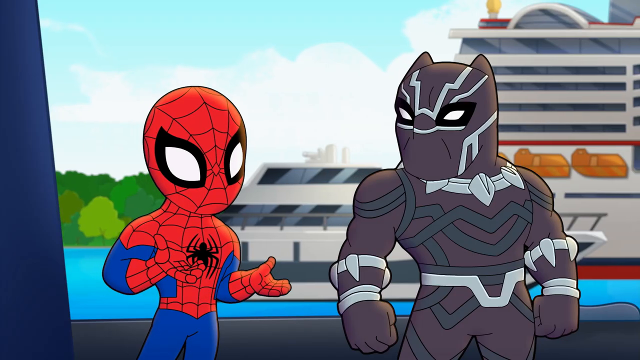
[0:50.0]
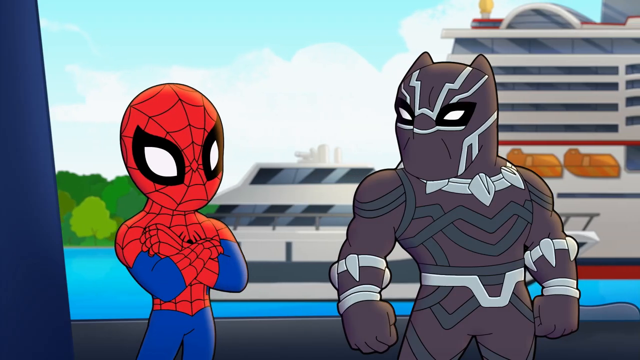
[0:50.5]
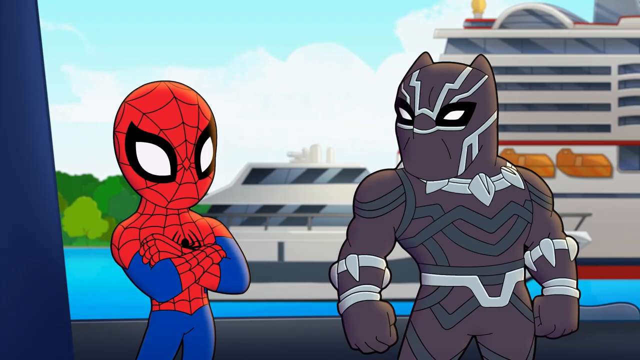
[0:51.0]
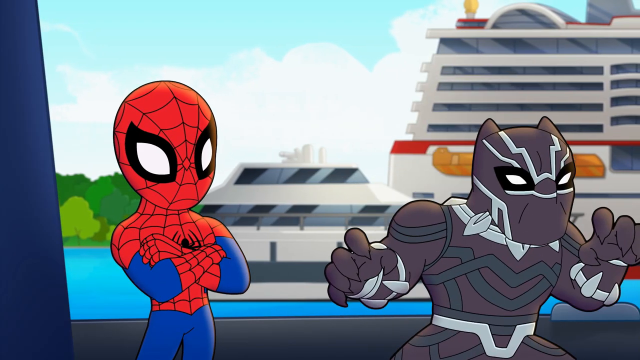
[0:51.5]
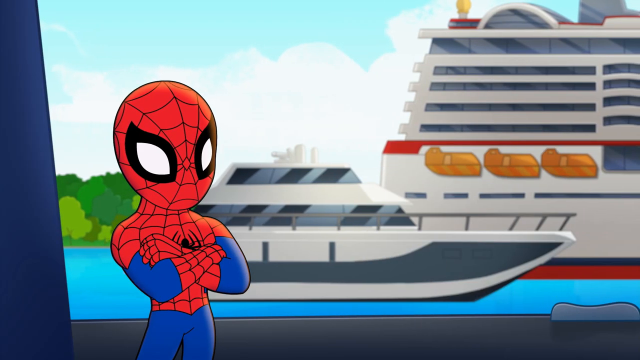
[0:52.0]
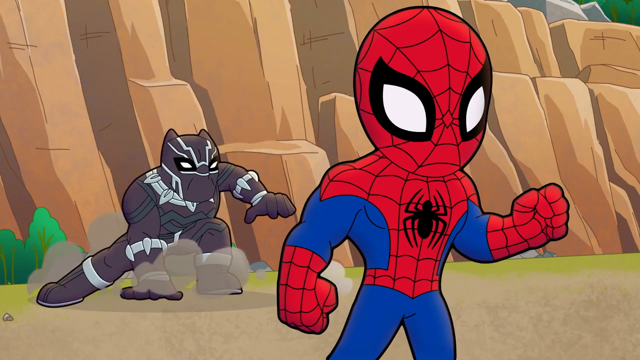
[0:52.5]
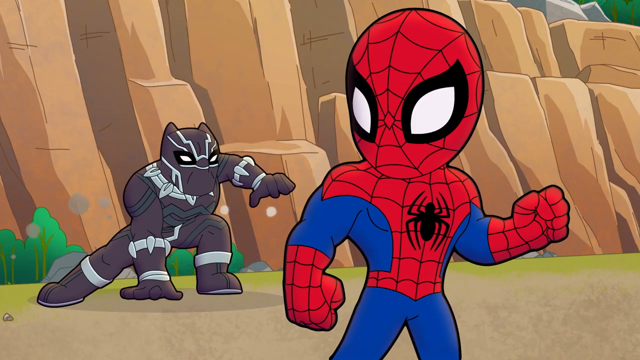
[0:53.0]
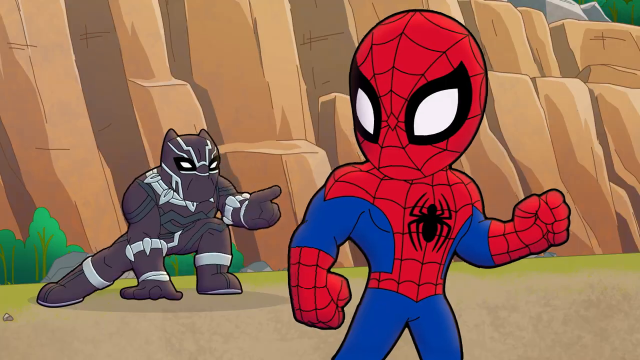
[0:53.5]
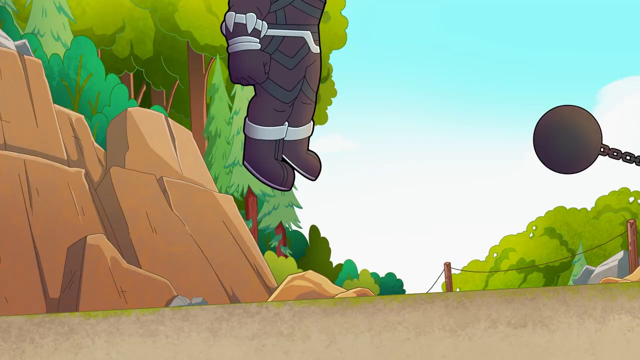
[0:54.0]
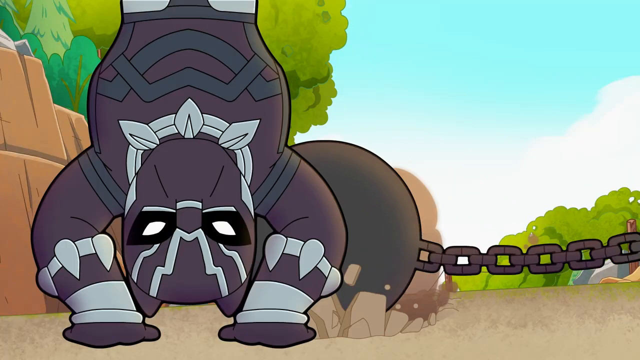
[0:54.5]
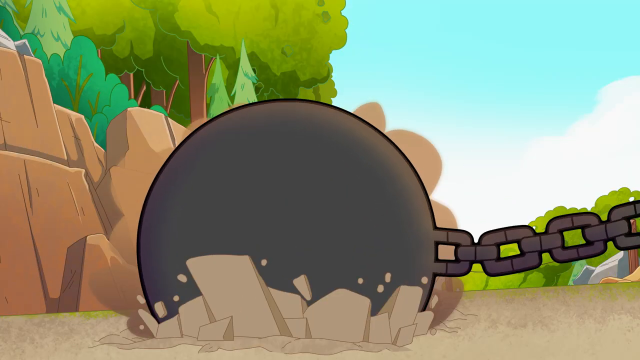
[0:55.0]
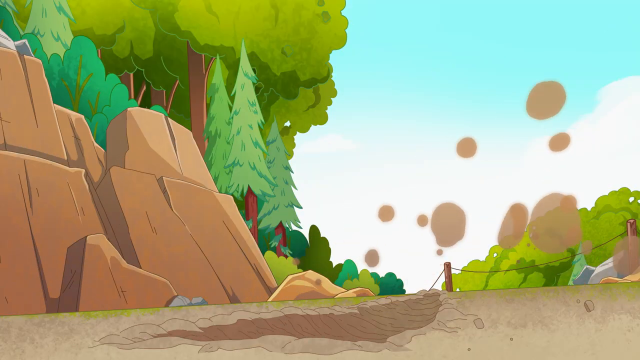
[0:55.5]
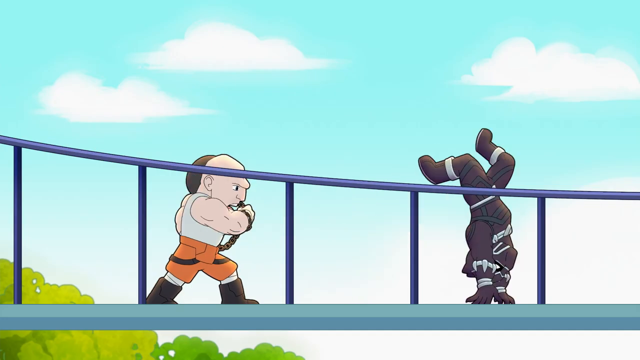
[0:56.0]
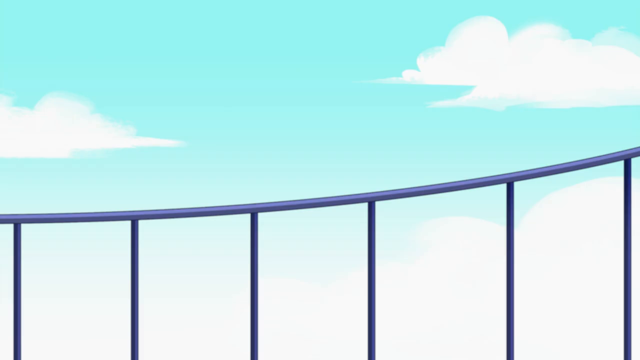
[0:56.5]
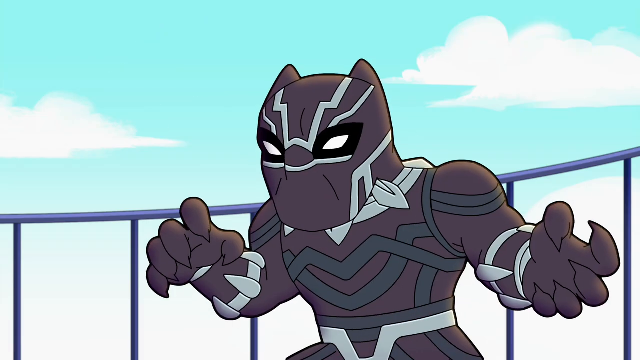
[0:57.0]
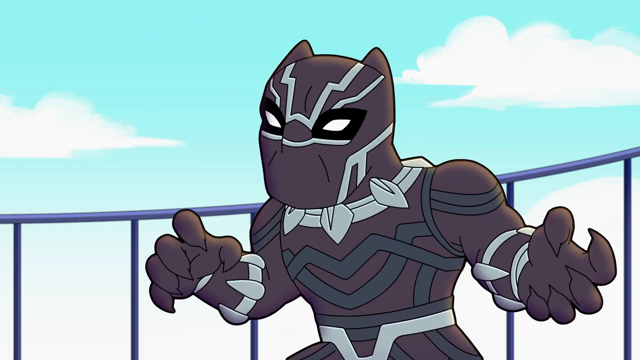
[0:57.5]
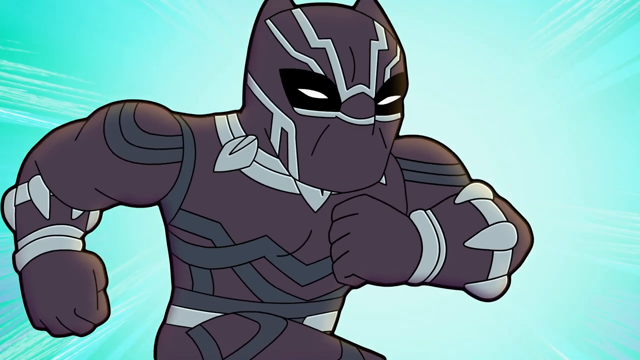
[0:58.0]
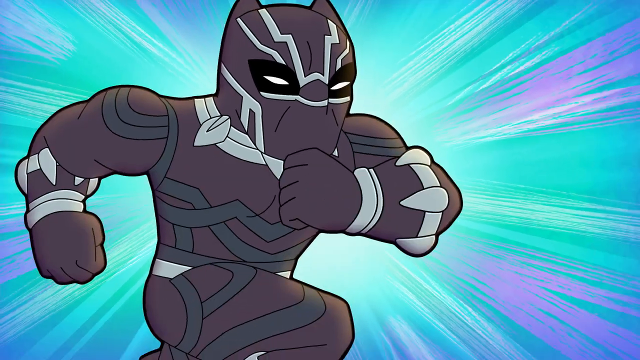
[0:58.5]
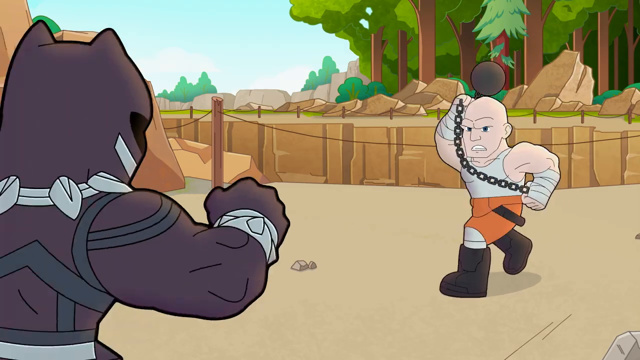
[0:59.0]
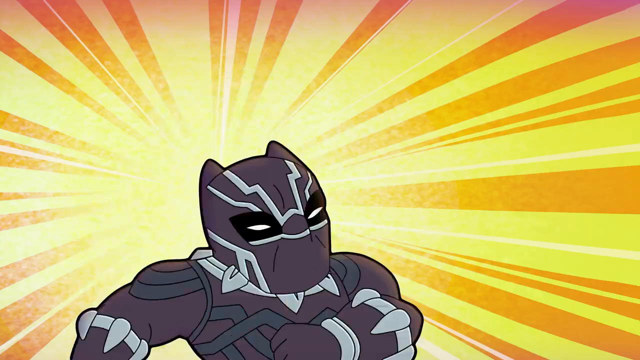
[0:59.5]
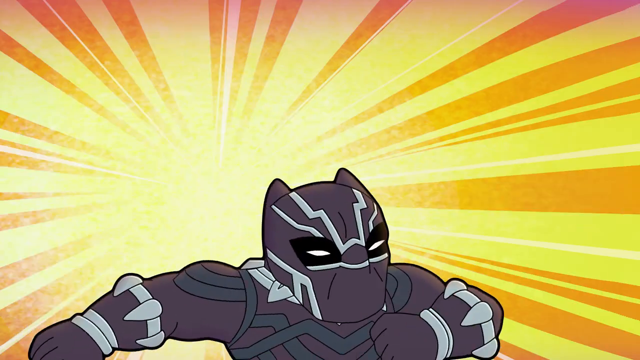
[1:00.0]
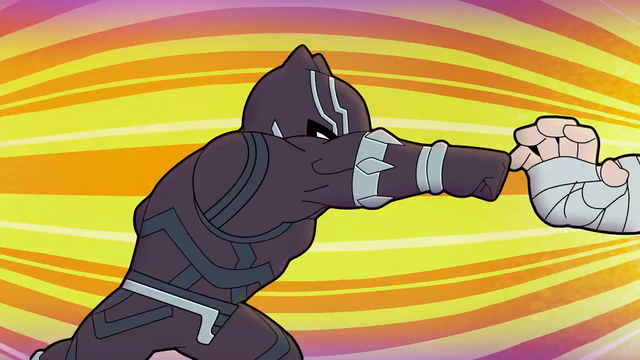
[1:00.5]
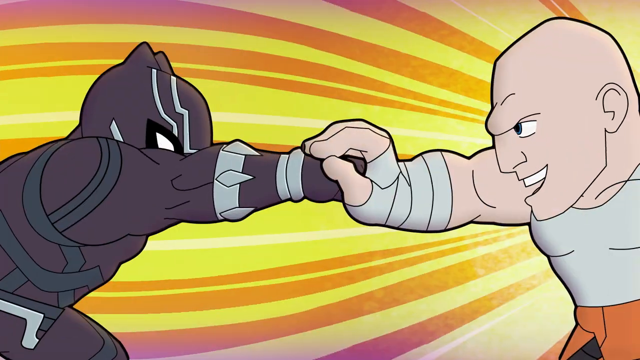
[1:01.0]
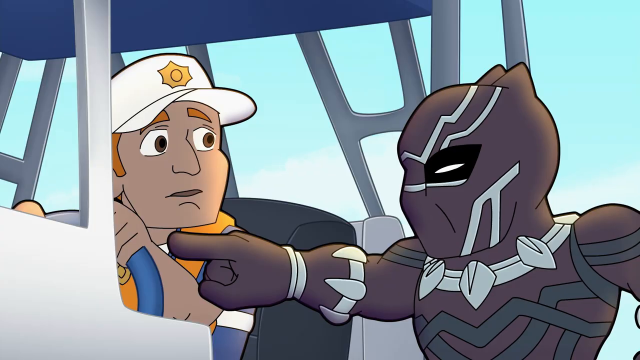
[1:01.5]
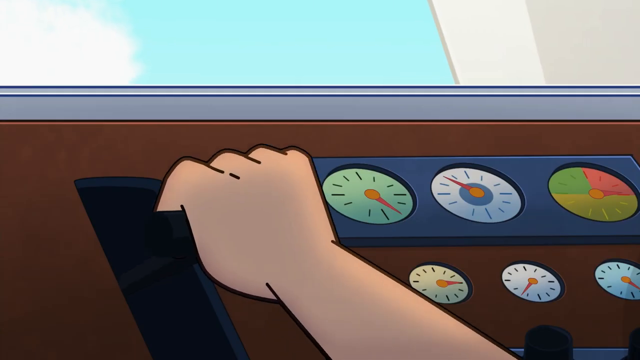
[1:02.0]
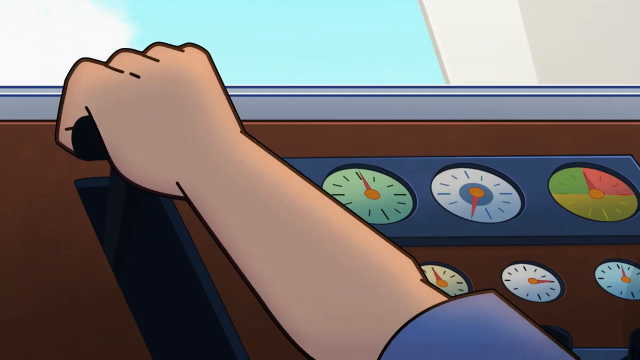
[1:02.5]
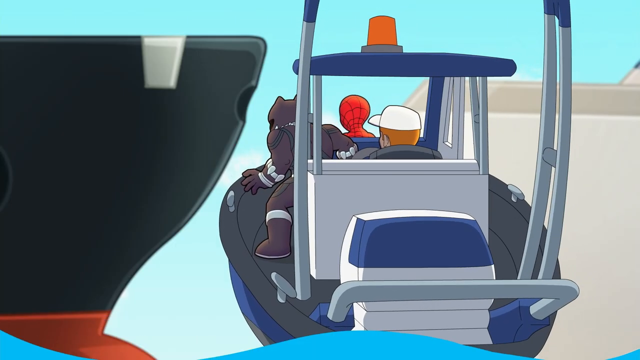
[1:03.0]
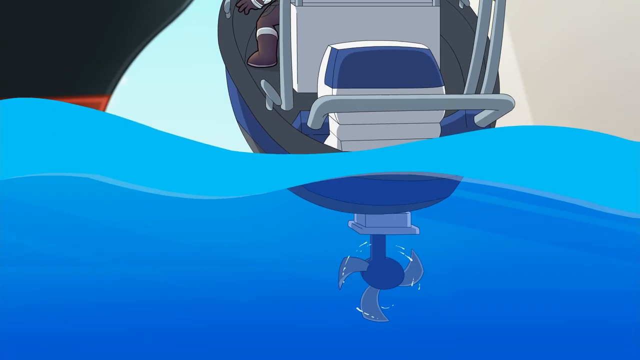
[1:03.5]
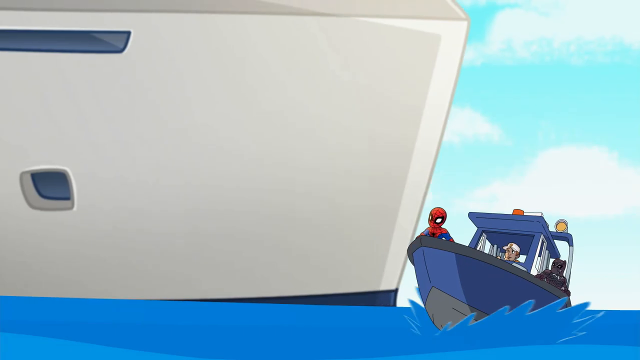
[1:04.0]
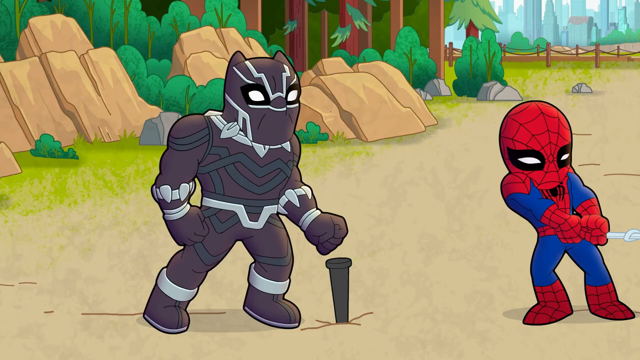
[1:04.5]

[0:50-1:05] The same two characters appear, along with more of the bald muscular man, who flings his ball and chain above his head toward the maroon-clad superhero. The maroon-clad superhero runs and jumps, much more active here. The scenes jump back and forth between a desert-like area at the bottom of a cliff and the boats, with people throwing punches, including the bald man. Spidey shows up now and then. At one point the bald man with the ball and chain and the maroon-clad superhero walk across a bridge. Then Spidey and the maroon-clad figure travel on a boat. The action goes back and forth between the cliff bottom, the boat and the bridge, against a very colorful cartoon background. Spidey seems young, while the other, very acrobatic maroon-clad superhero seems a bit older. The big bald man with the ball and chain throws a punch-like attack as the shot ends.